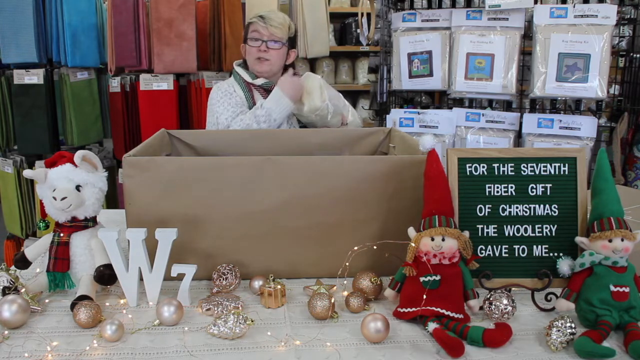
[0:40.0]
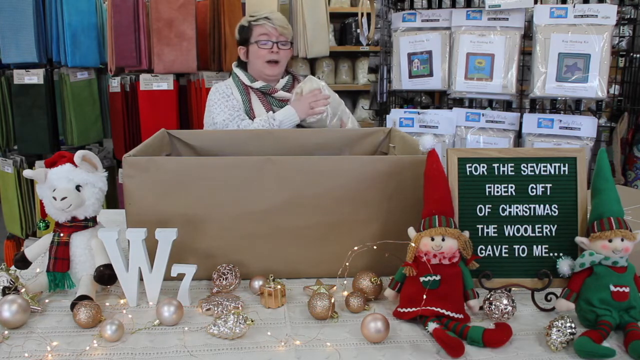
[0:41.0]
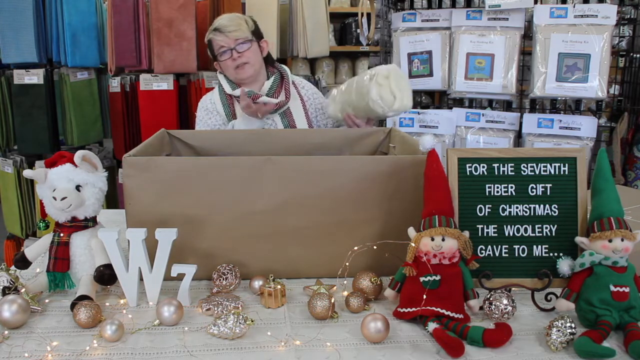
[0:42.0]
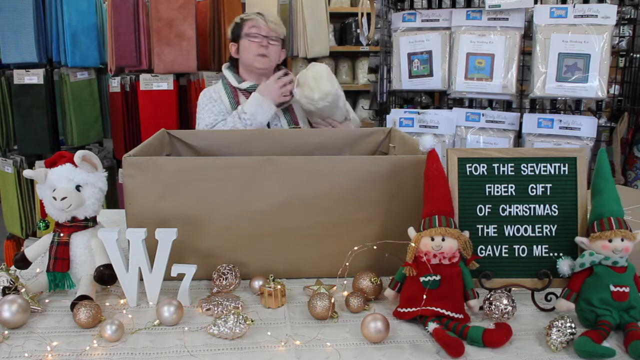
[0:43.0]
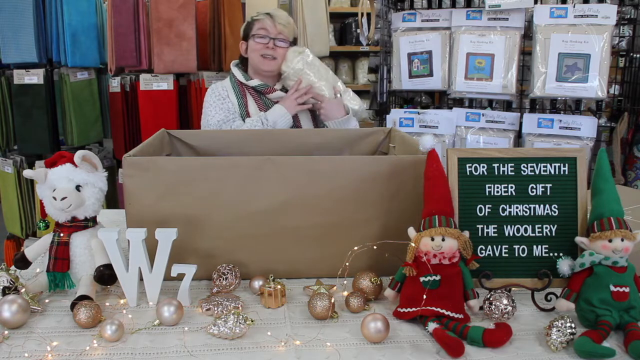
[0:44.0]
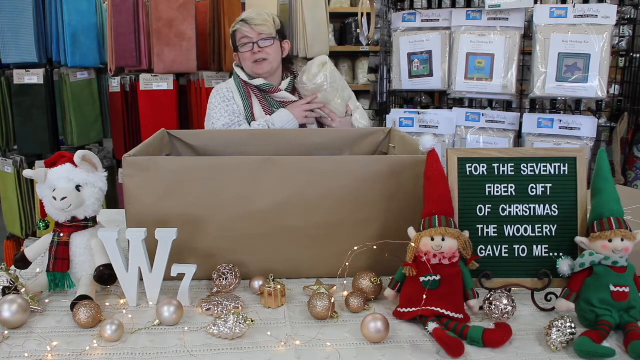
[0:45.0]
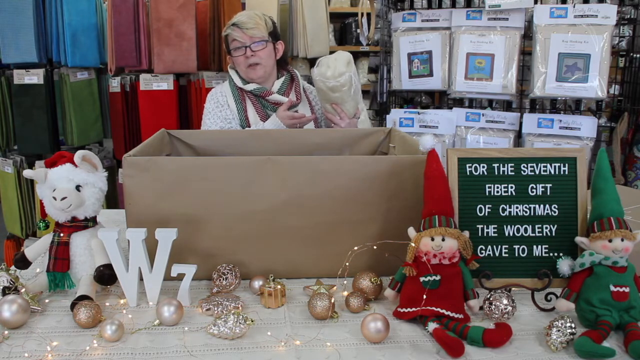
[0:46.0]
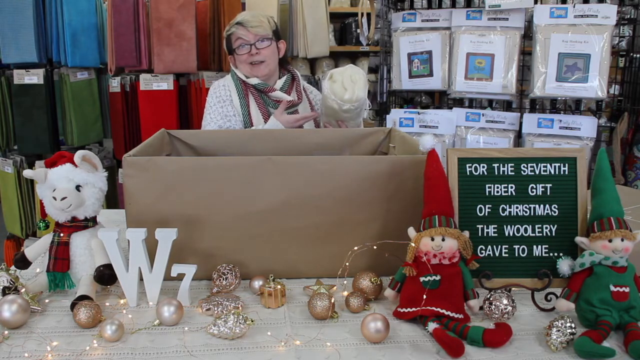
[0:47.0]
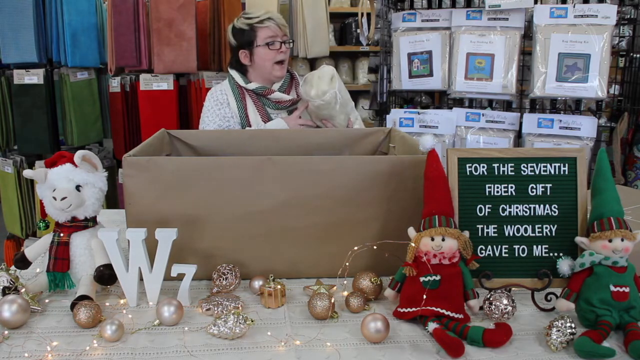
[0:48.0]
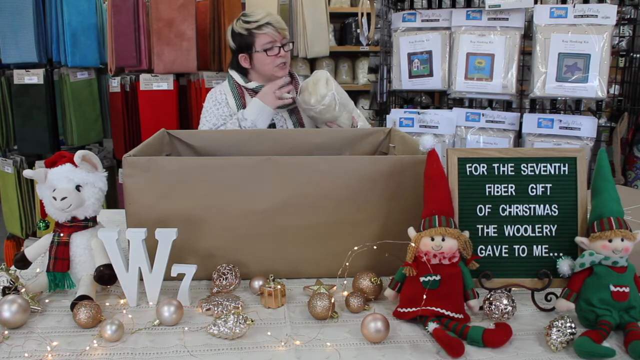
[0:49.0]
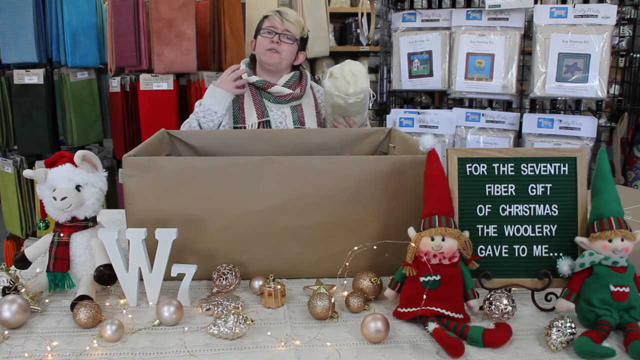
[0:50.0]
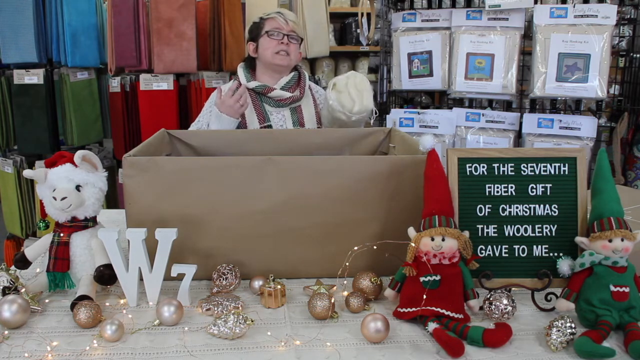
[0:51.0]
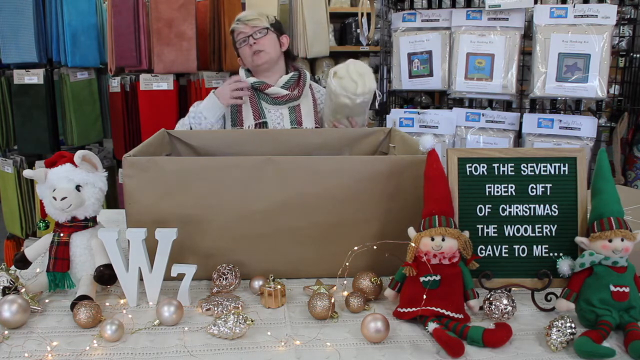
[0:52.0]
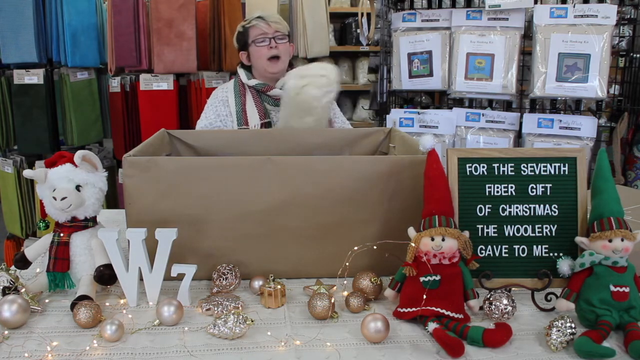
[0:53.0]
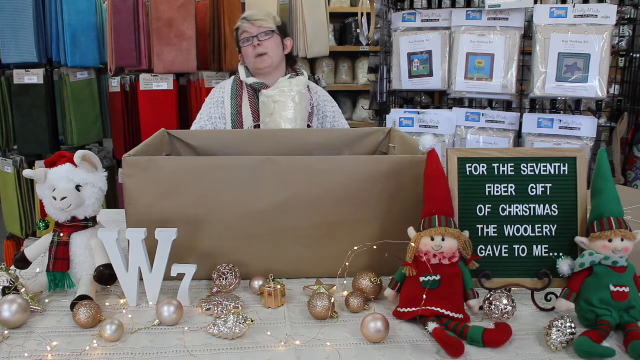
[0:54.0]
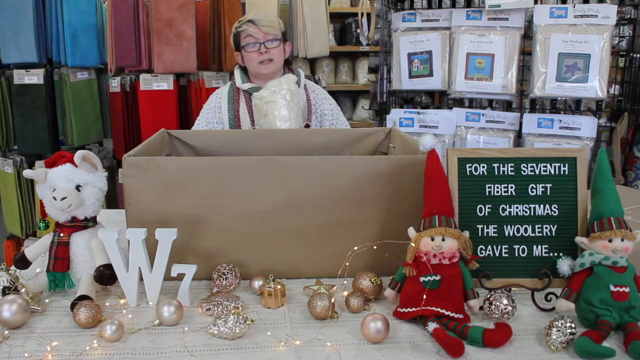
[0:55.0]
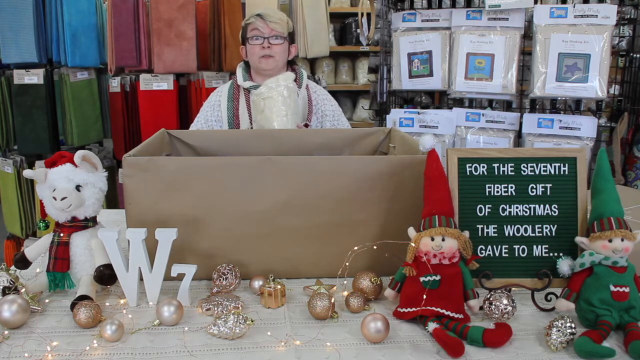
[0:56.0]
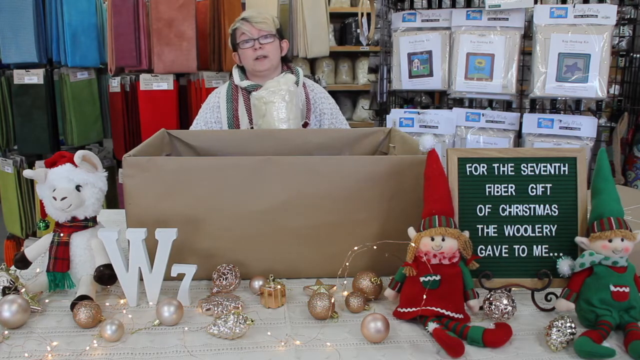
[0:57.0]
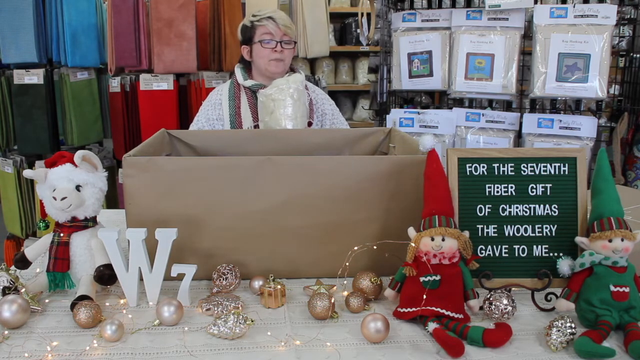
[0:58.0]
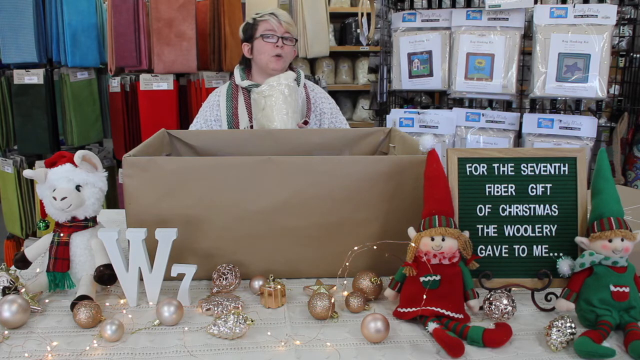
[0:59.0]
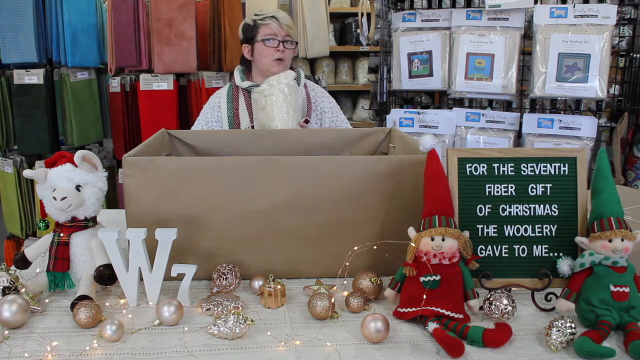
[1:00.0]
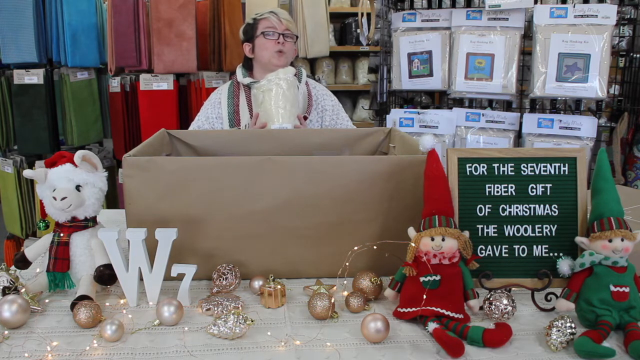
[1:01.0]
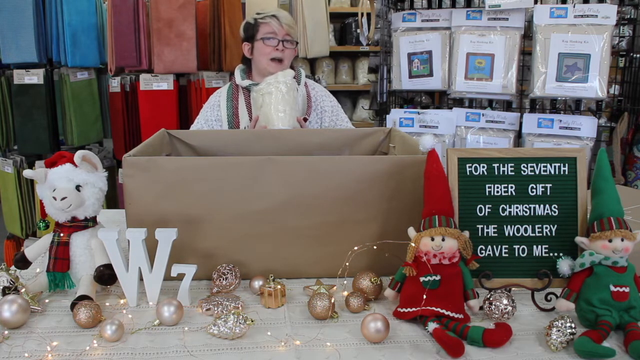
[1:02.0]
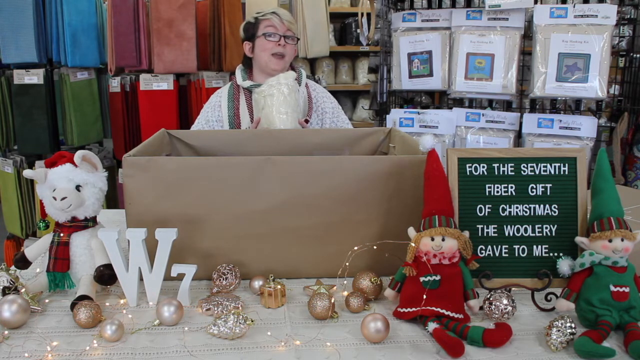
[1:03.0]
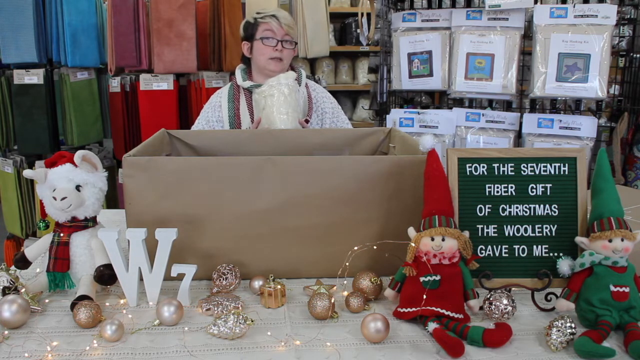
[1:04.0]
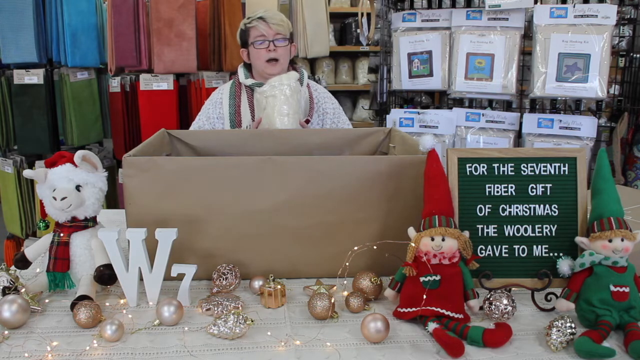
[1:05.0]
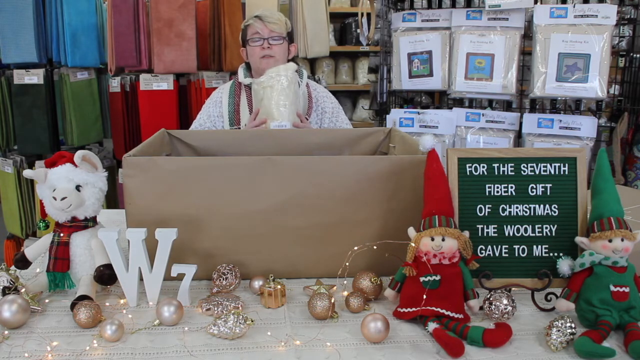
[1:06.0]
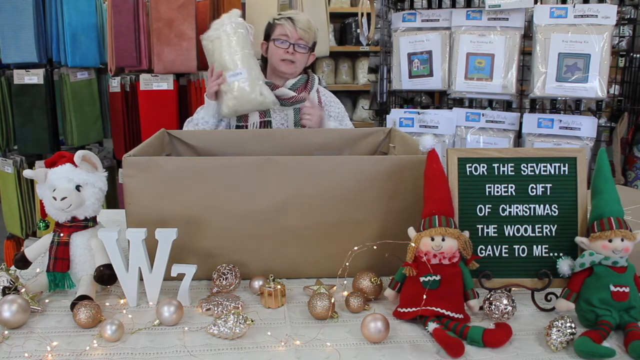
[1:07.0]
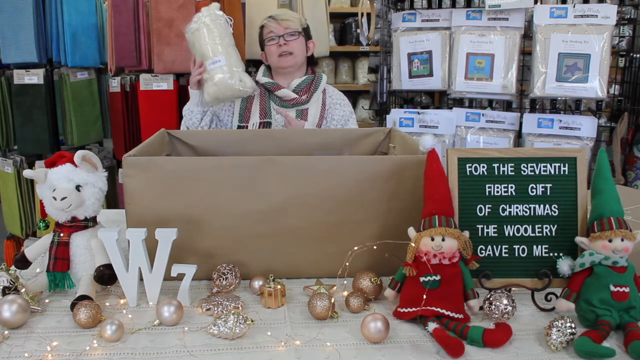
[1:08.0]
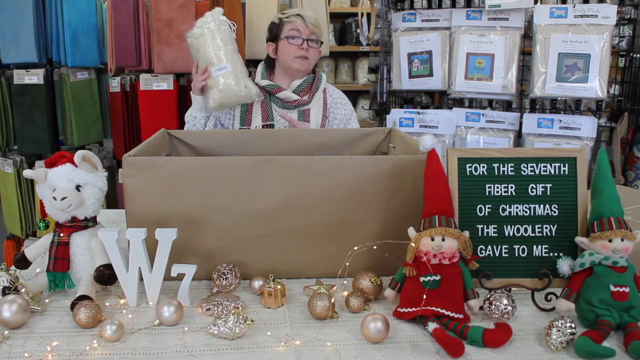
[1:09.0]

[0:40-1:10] A person stands behind a large brown box, holding a bag of white wool. They wear a white sweater with a white, green and red scarf, have short brown hair with blonde highlights in front, and wear glasses. To the left of the box is a white stuffed animal wearing a red plaid scarf and a red hat. A W7 appears on the table. To the right of the box are two stuffed plush elves surrounding a small sign board with the message "For the seventh fiber gift of Christmas, the woolery gave to me." The person continues to hold the bag of wool, gesturing to it and smiling at it as they talk to the camera. They move the wool around and show it to the viewer, speaking animatedly about it, then lift the wool up and point to it.